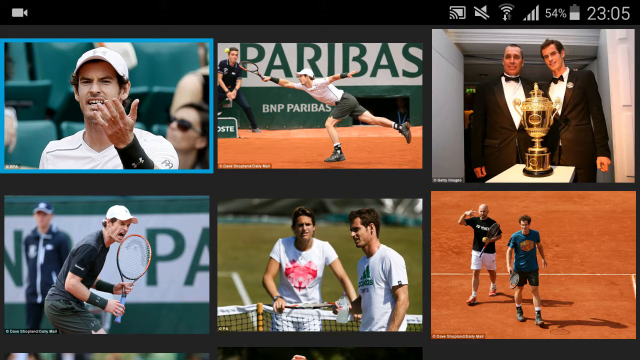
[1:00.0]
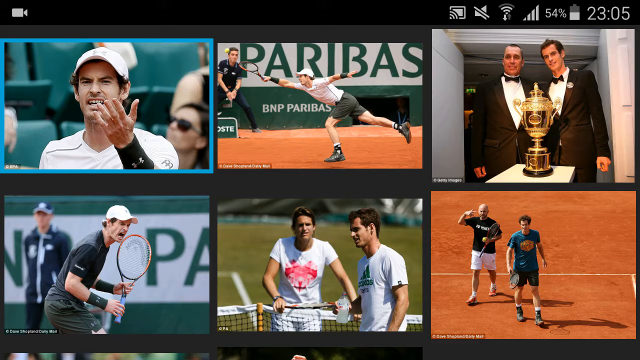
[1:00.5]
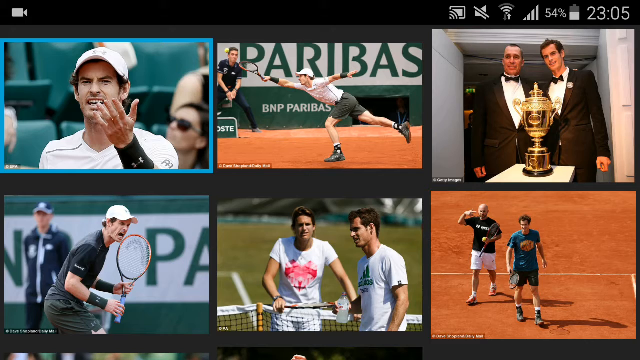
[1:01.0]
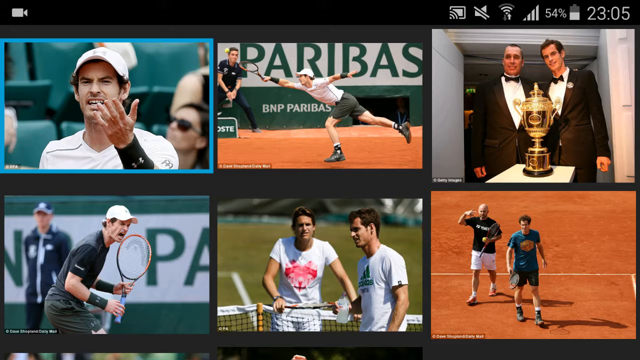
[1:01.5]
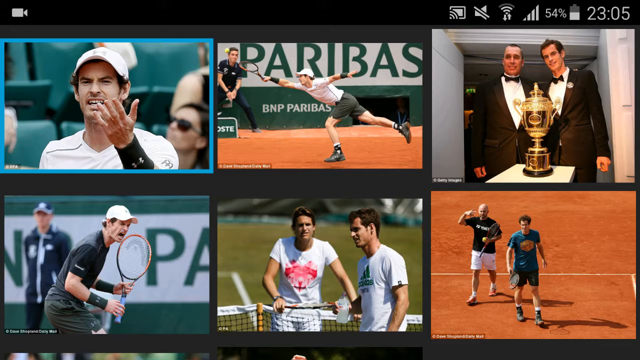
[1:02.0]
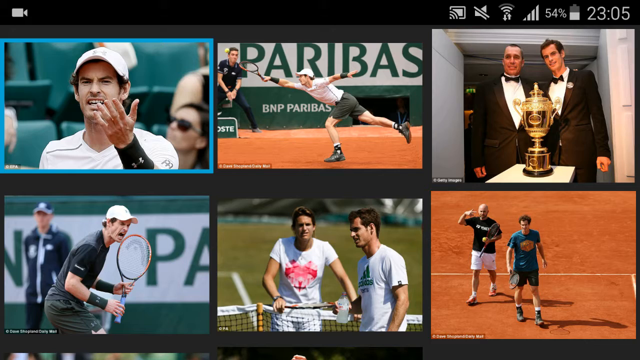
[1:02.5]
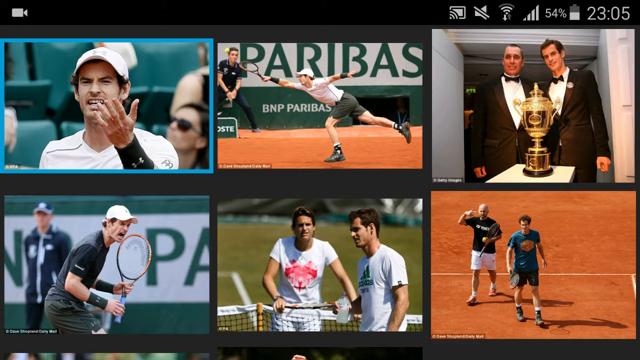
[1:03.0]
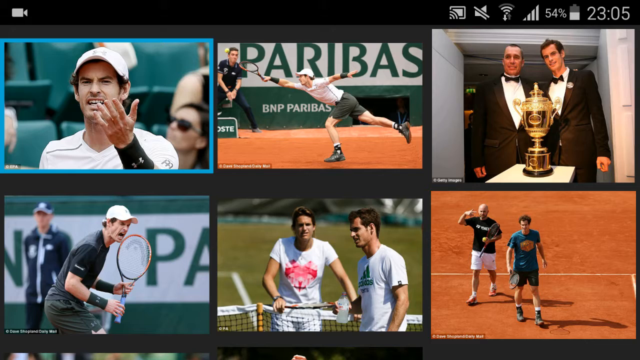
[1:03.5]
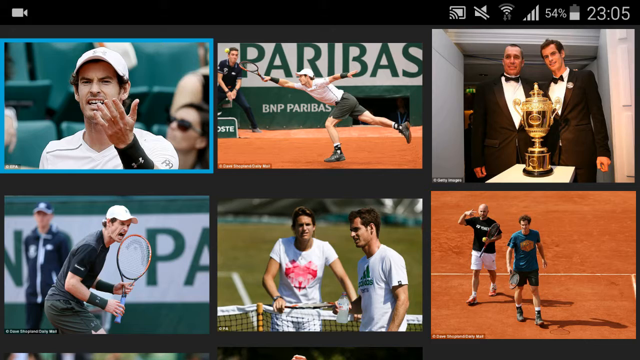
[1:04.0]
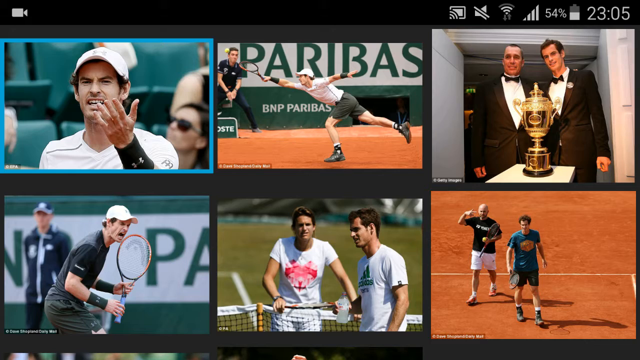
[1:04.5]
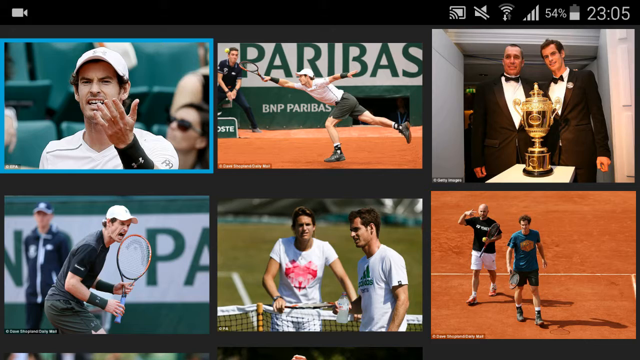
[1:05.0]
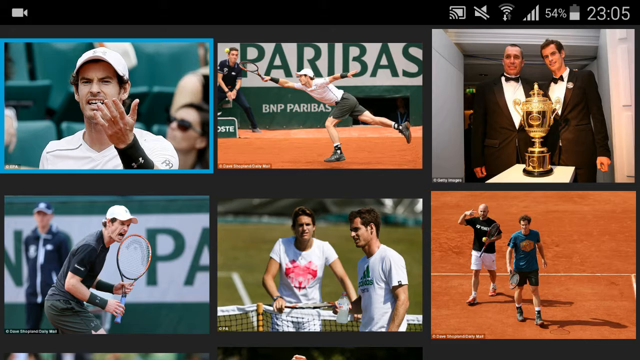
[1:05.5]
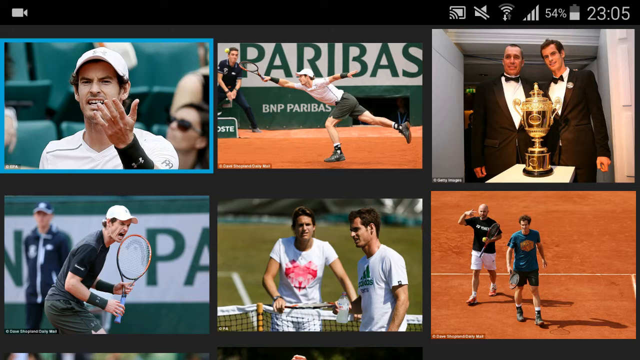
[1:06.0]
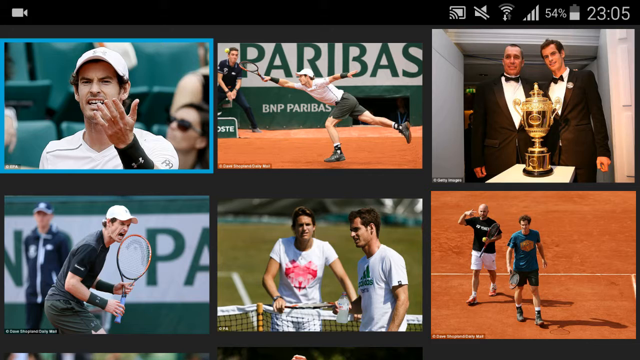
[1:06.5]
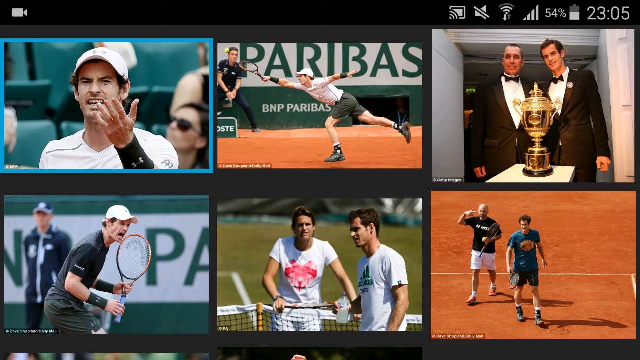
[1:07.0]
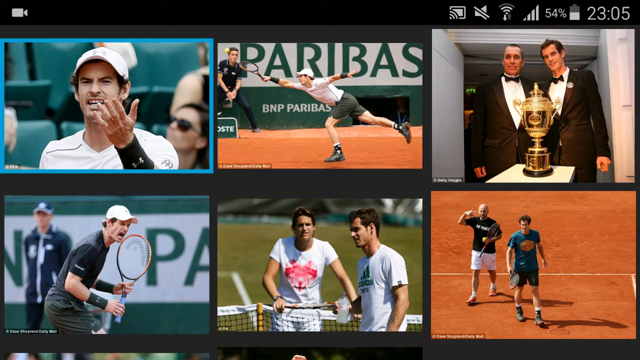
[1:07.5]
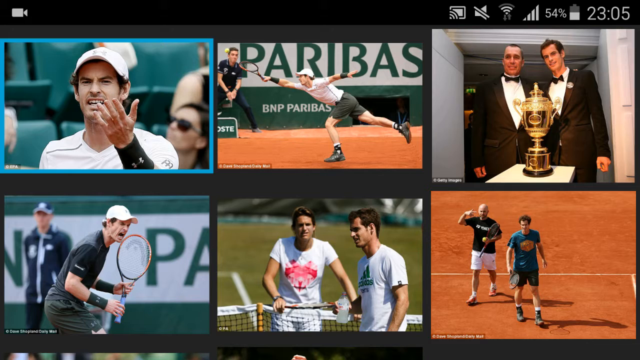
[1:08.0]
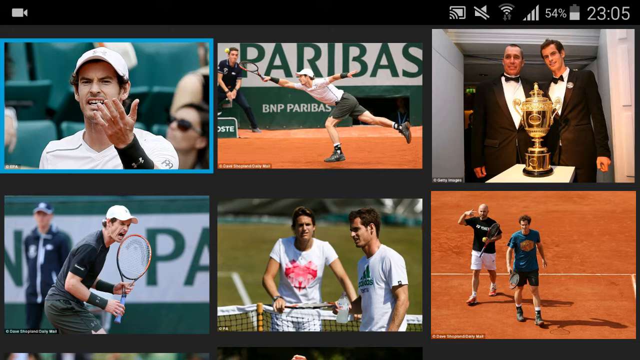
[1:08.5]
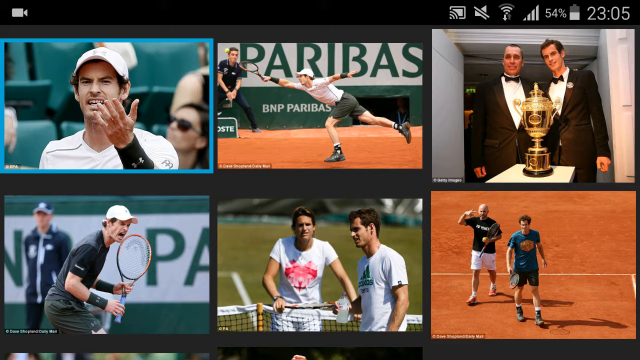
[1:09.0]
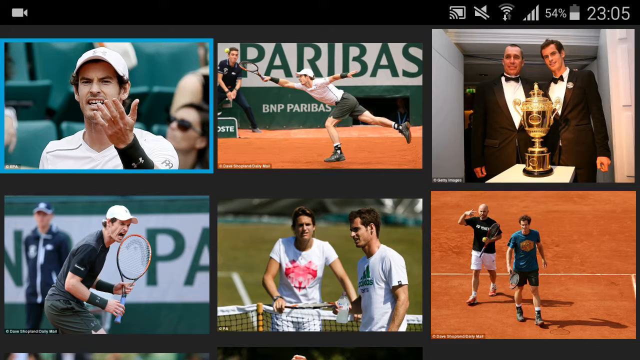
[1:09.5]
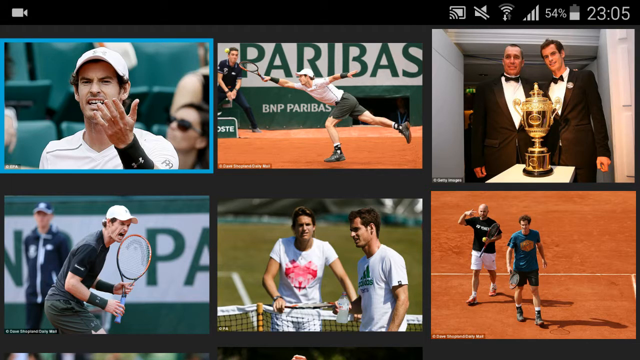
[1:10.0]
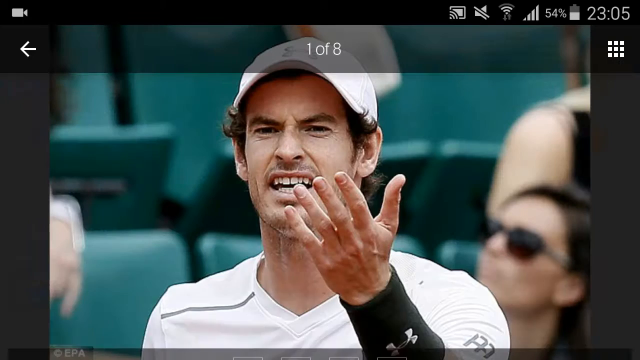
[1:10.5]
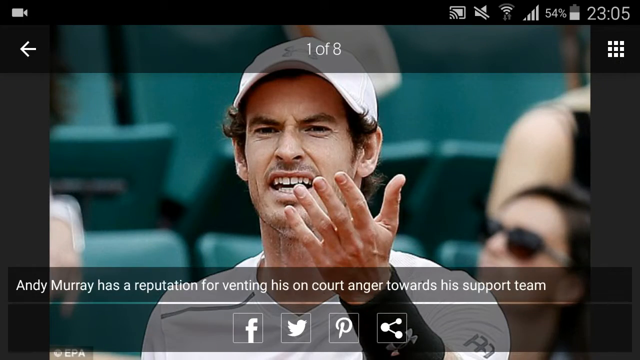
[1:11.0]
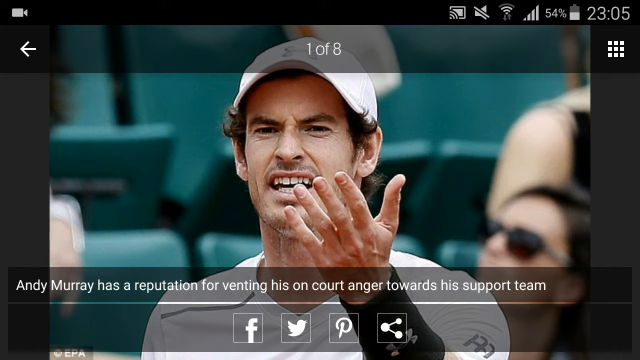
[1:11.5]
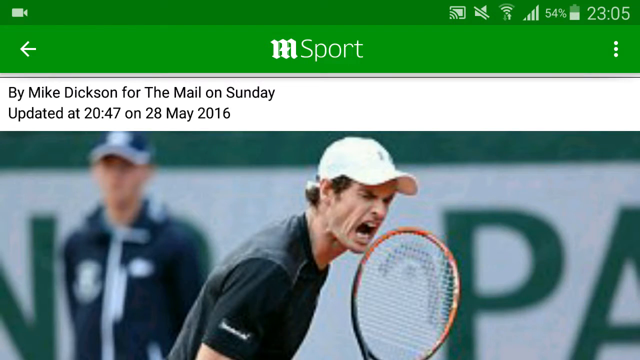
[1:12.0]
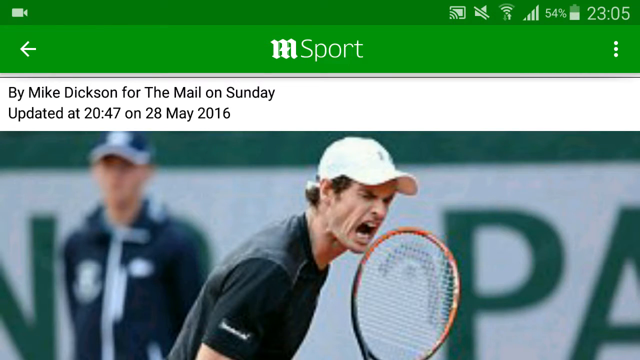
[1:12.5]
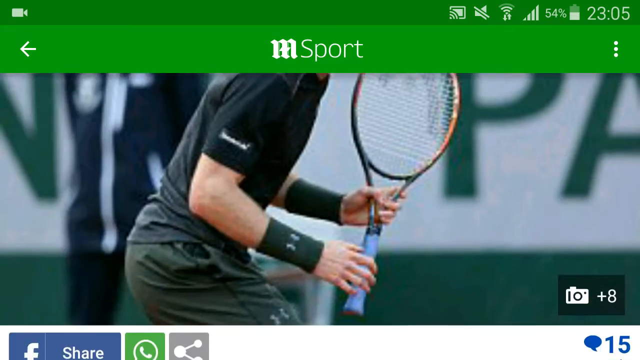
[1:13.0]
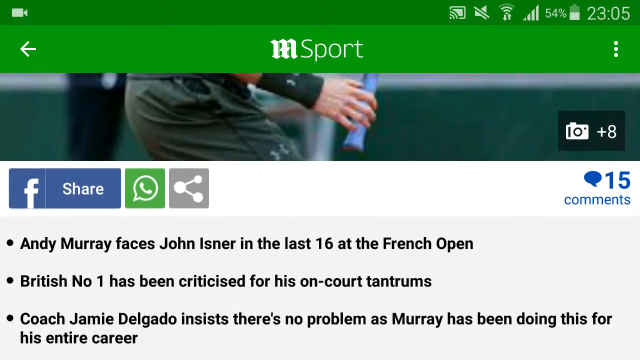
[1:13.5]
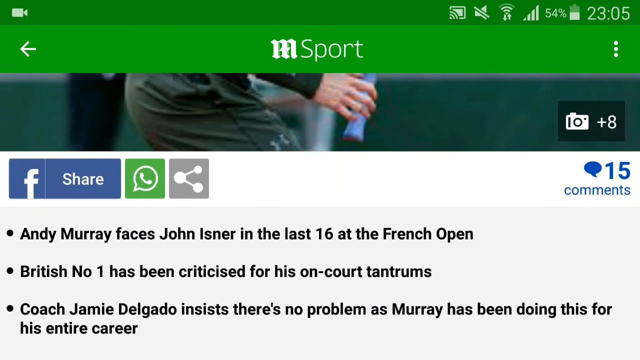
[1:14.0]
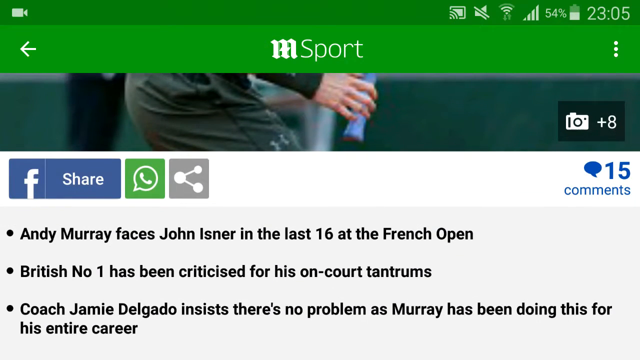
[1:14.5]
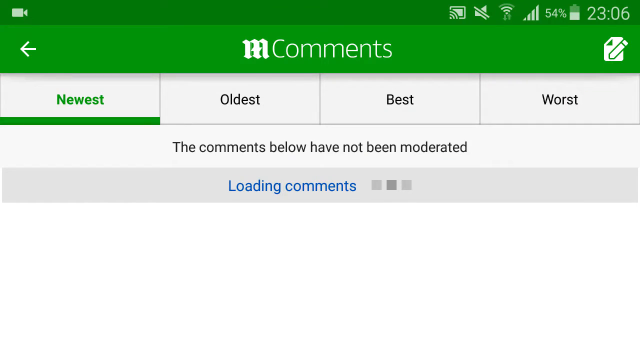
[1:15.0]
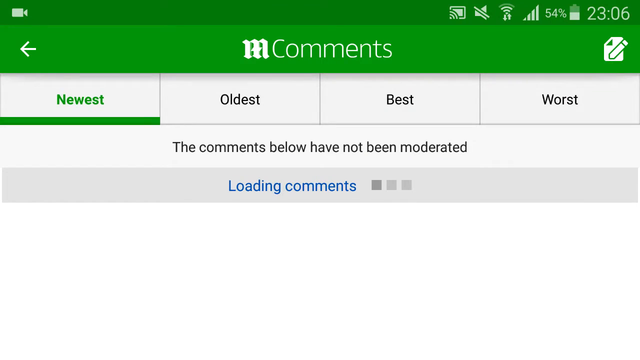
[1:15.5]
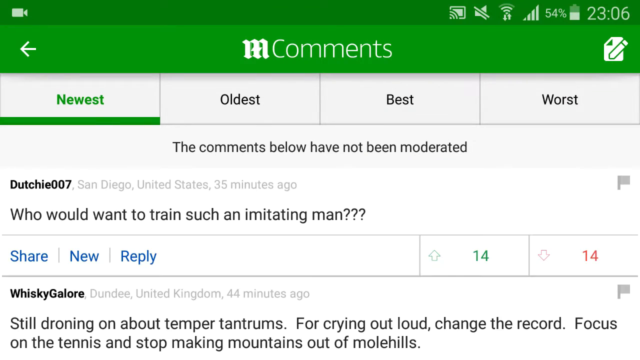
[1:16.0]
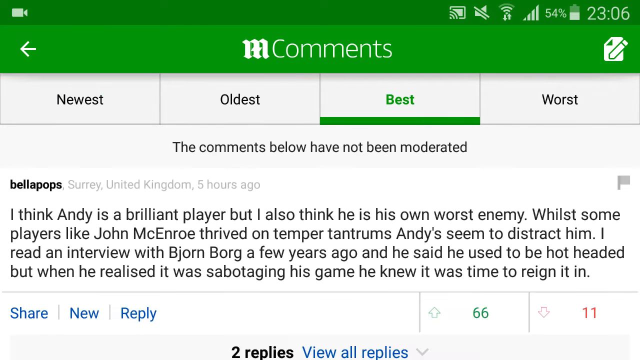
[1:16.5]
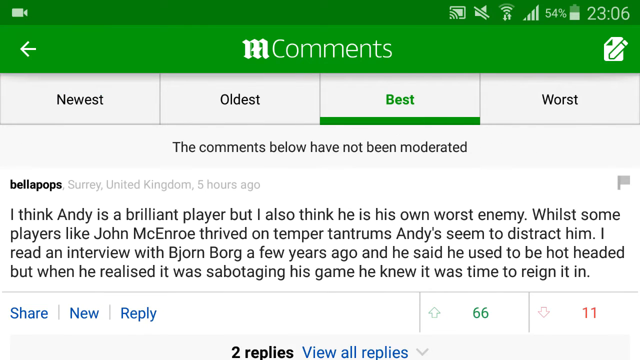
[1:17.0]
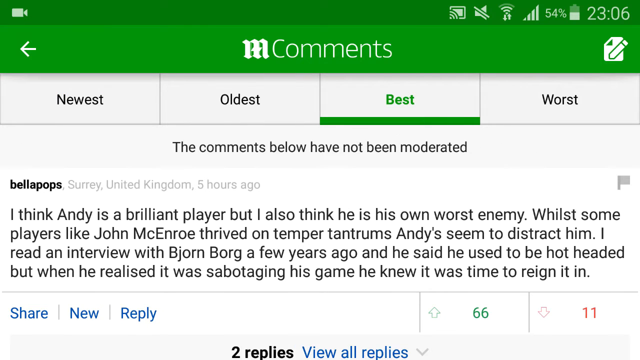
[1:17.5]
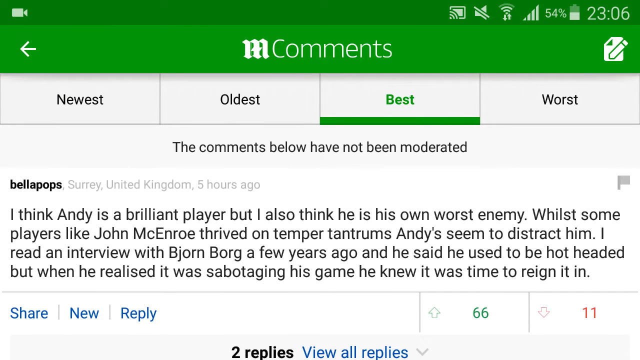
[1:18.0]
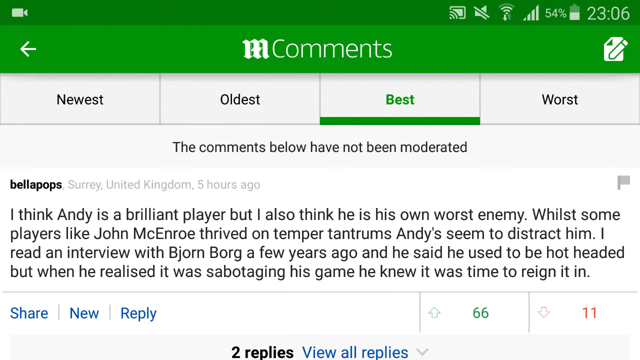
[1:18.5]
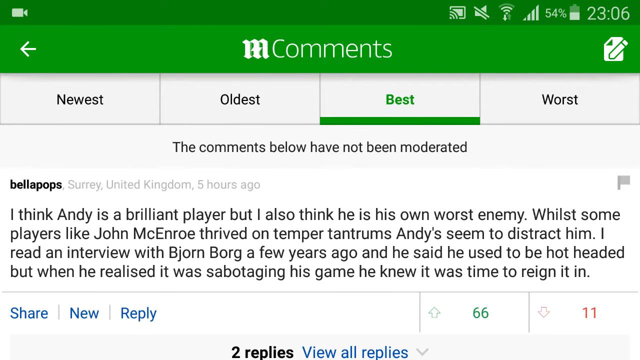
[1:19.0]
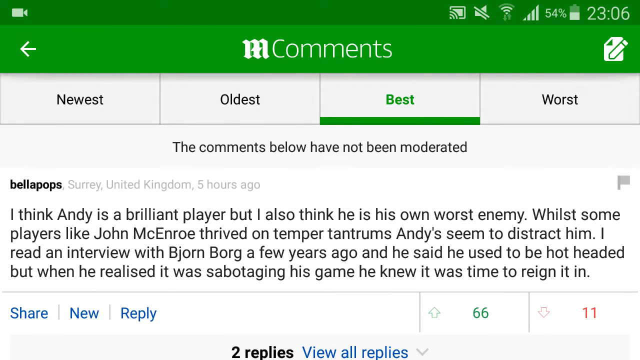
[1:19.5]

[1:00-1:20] Someone on a mobile device looks at photos of tennis player Andy Murray, with six on the screen. Top left shows him sitting down, sort of arguing a point. In the middle he is outstretched trying to hit the ball, on what looks like the Roland Garros clay court. To the right of that is a picture of him and Ivan Lendl in tuxedos in front of a championship trophy. Bottom left shows him celebrating a point, looking like he is also at Roland Garros. To the right of that, he and another person are standing on either side of a net on a grass court on a sunny day, both wearing white t-shirts. To the right of that, Andy Murray in a blue shirt is playing tennis on a clay court with a man in a black shirt who seems to have a shaved head; they seem to be doubles partners. One of the images is clicked; there are eight images in total, with "1 of 8" sort of in white text above the selected photo, which shows him in a white cap and white shirt raising his left hand as if confused or arguing something. The view then returns to the main page of the newspaper article and scrolls down to three top points about the article. The comments on the page load, including one from someone called Bella Pops. The comments can be sorted by newest, oldest, best or worst, and best is selected.